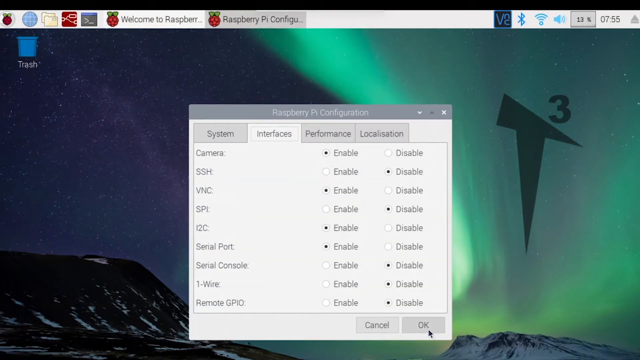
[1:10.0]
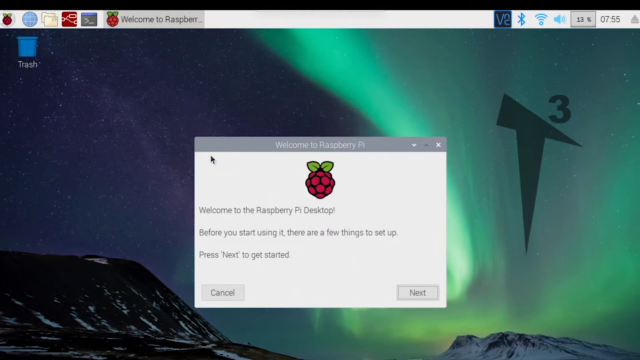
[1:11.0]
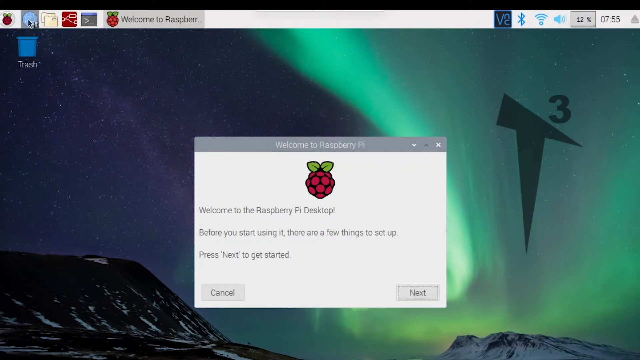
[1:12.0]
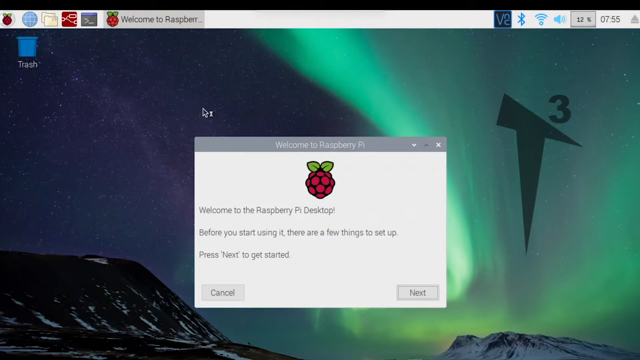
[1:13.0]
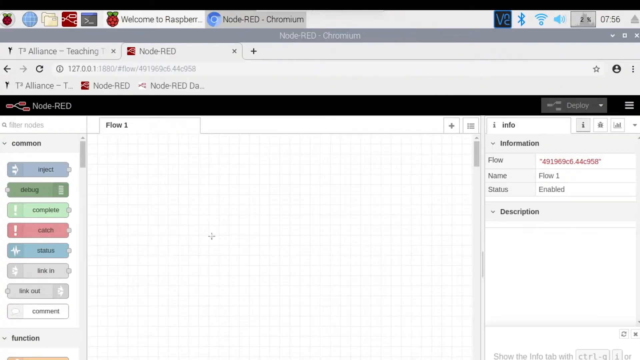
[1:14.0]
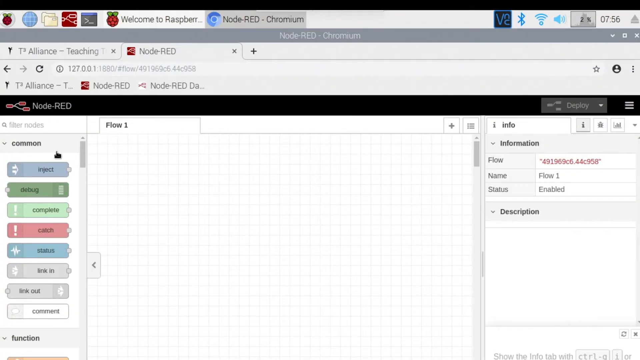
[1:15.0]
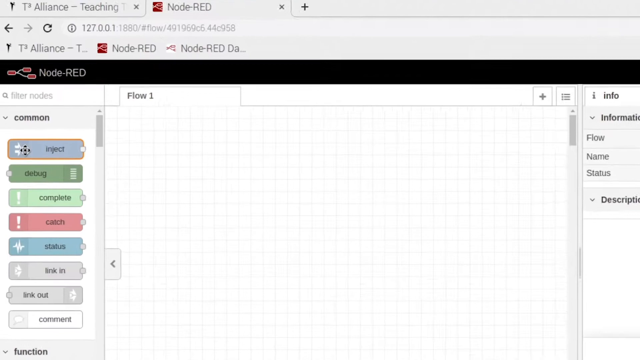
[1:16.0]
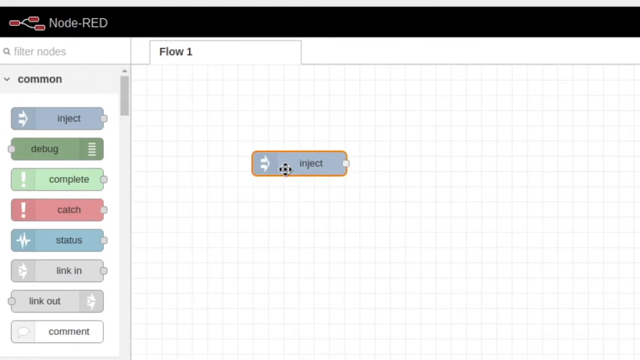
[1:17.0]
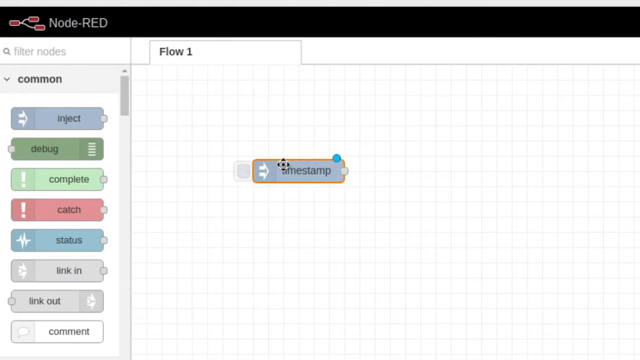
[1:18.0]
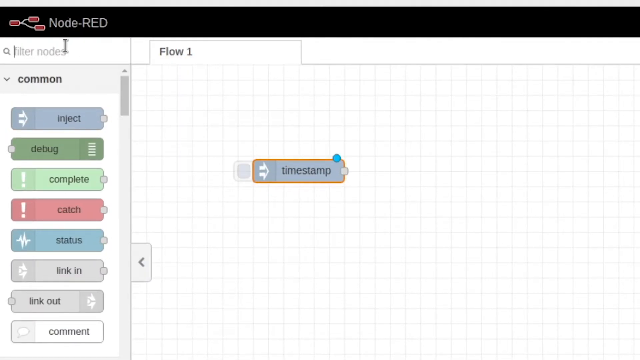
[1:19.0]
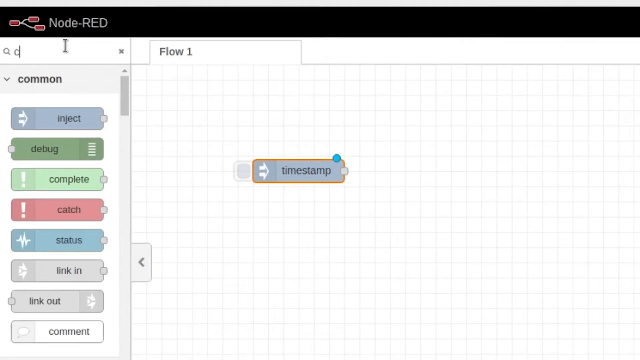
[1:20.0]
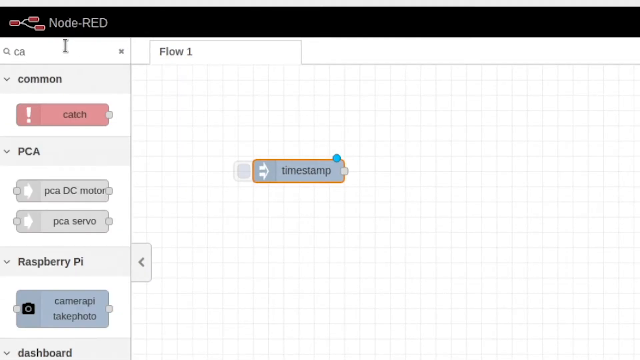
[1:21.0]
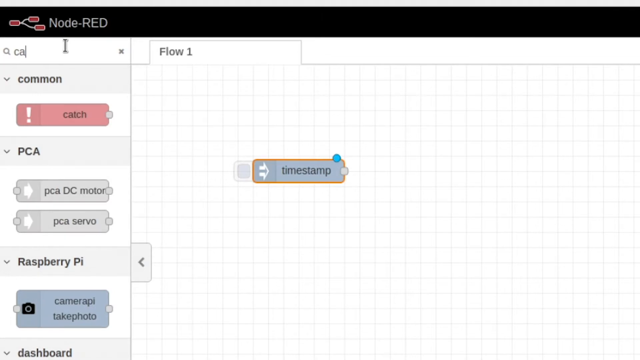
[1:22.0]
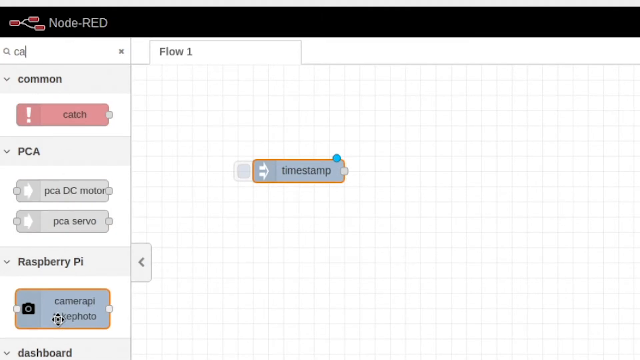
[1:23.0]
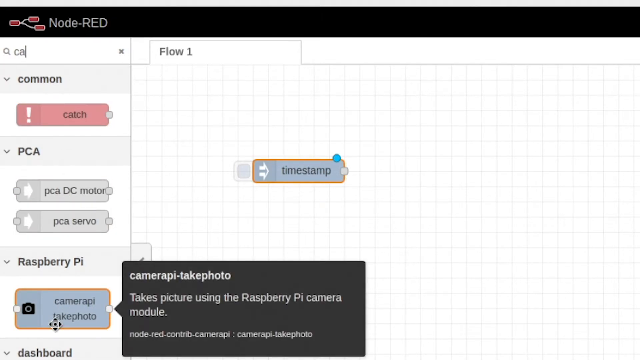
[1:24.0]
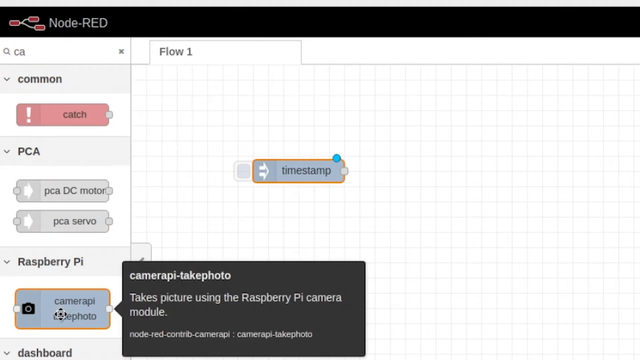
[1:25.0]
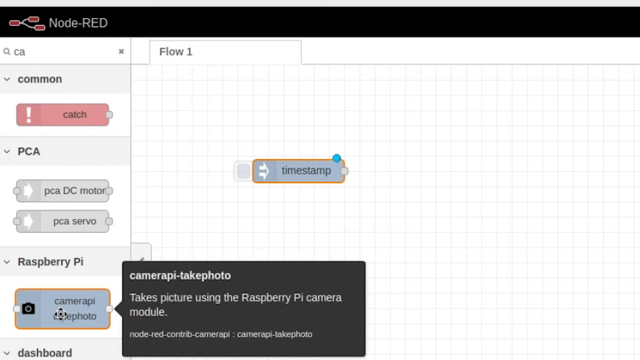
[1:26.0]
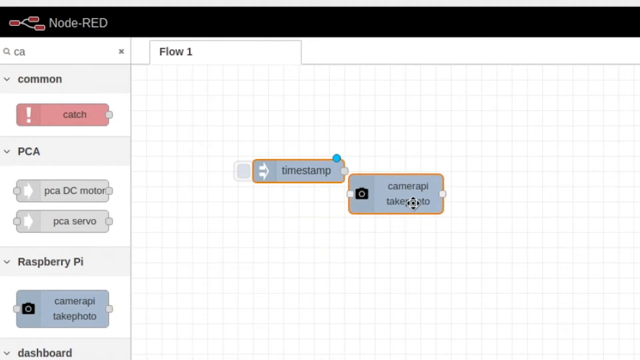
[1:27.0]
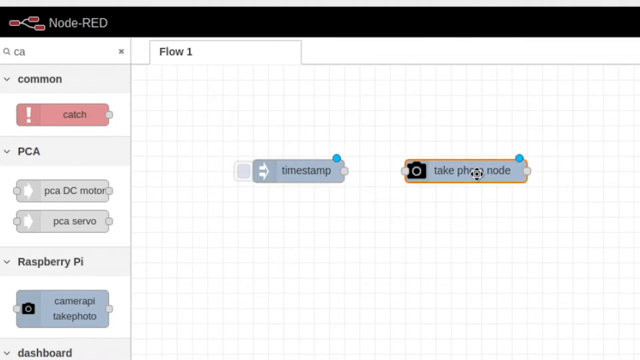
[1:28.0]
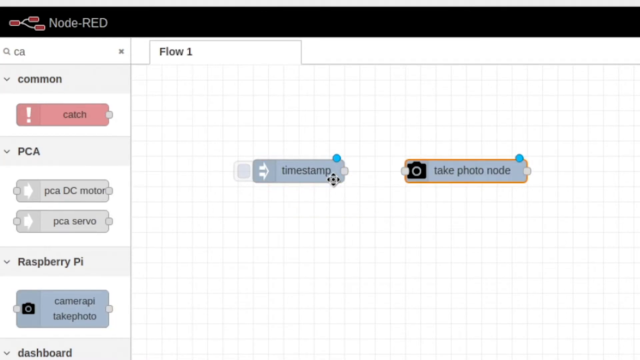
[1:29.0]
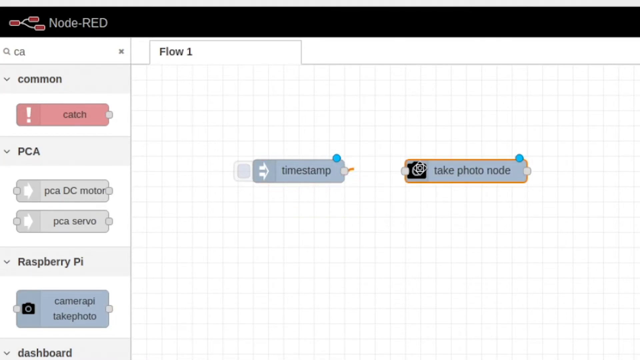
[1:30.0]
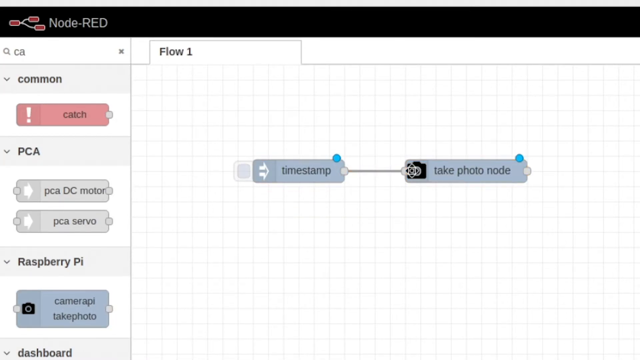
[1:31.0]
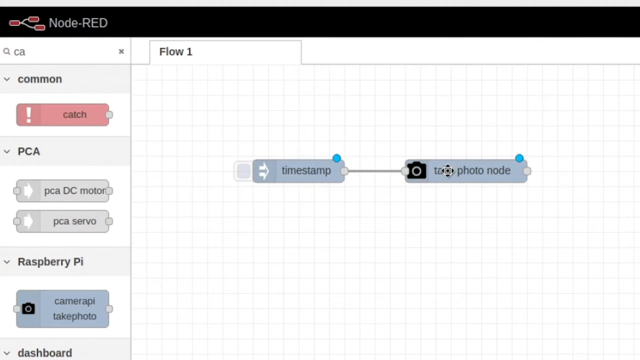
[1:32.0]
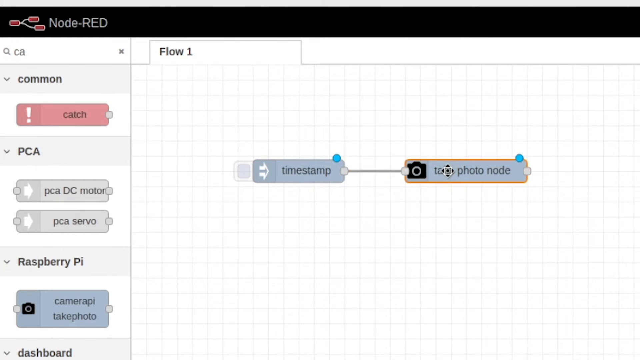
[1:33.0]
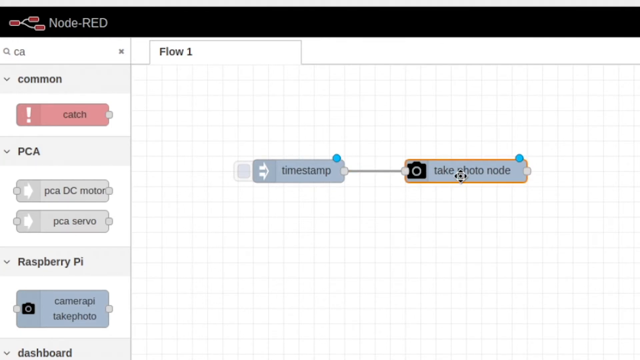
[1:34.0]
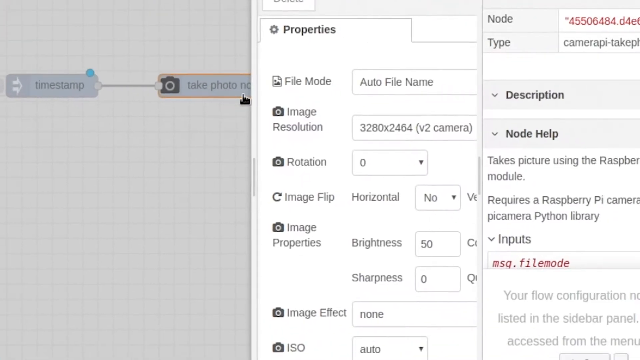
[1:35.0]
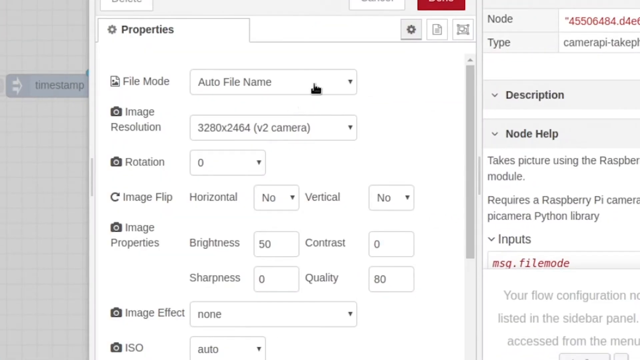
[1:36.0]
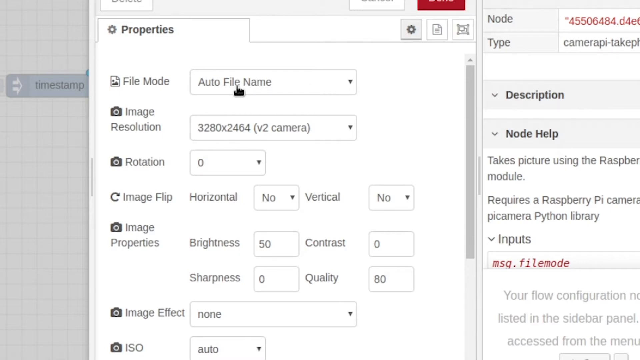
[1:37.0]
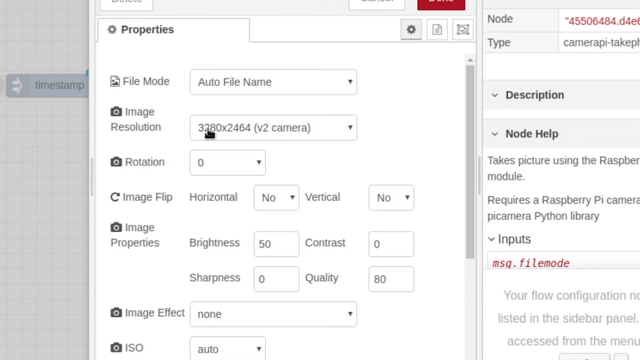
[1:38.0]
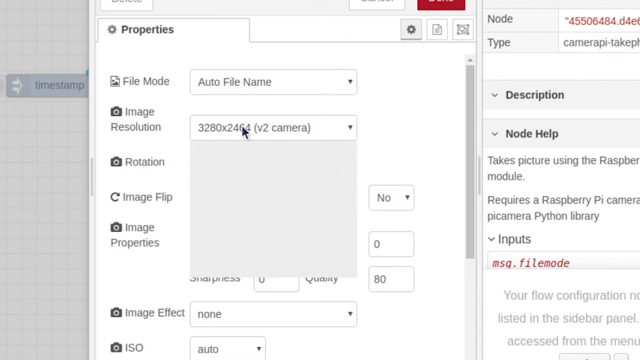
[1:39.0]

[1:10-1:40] A computer screen shows the Aurora Borealis and a blackened night sky with stars, a mountaintop on the left and a snow-capped mountain on the right, and a pickaxe shape with the number 3 on the Aurora Borealis. In the center of the screen is a Raspberry Pi Configuration window reading "Raspberry Pi Configuration System Interfaces Performance Localization", with an enabling and disabling chart, and a trash icon is at the top left of the screen. The screen then changes to a spreadsheet labeled "Flow 1" with many squares. On the left are rectangles of different colors containing the words "Inject", "Debug" and "Complete". In the Flow 1 area is a box that says "Time Stamp". Someone types "CA" on the left side, bringing up "Camera Pi-Take Photo", which is moved, and a line appears from the Time Stamp to the Take Photo mode. The cursor moves, and a Properties box opens showing "Auto File Name" and "Image Resolution". The screen then goes back to the Aurora Borealis screen.